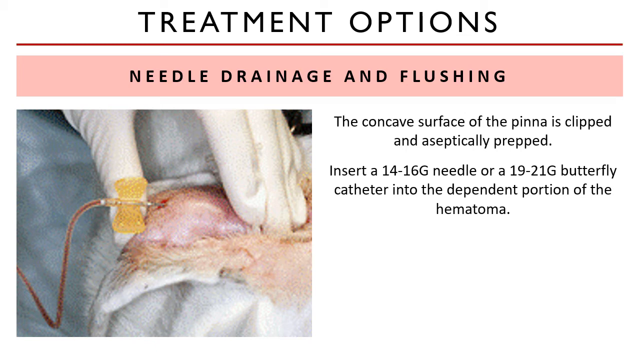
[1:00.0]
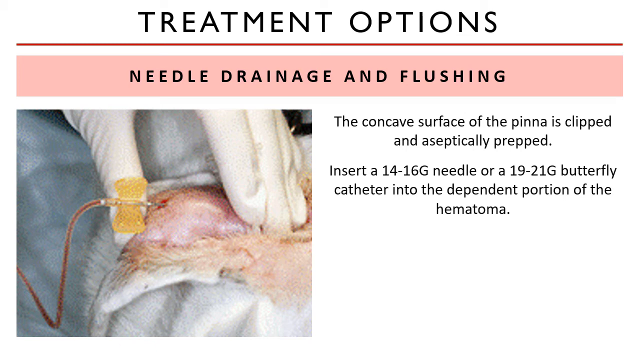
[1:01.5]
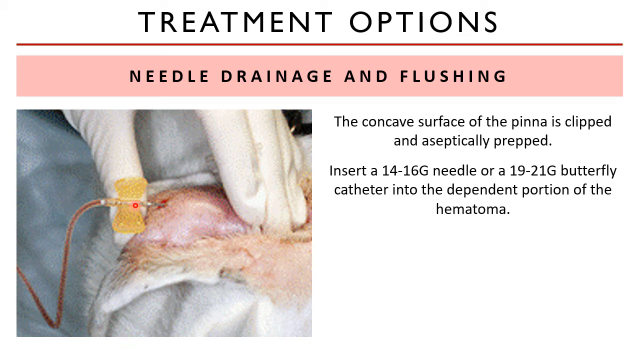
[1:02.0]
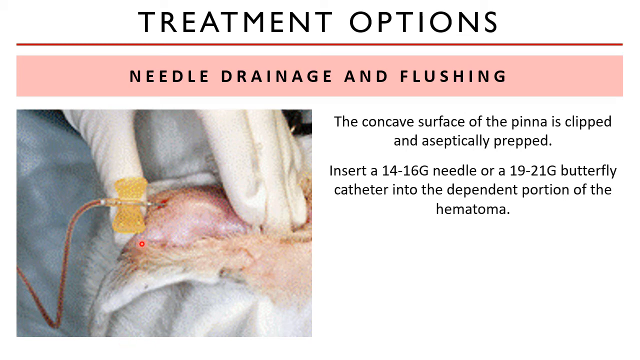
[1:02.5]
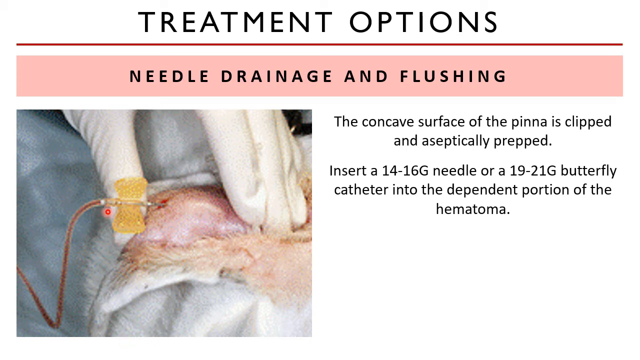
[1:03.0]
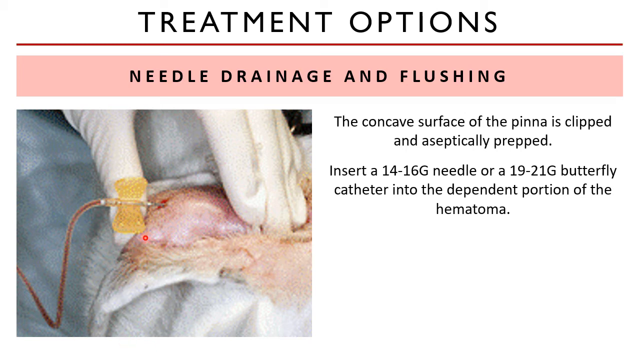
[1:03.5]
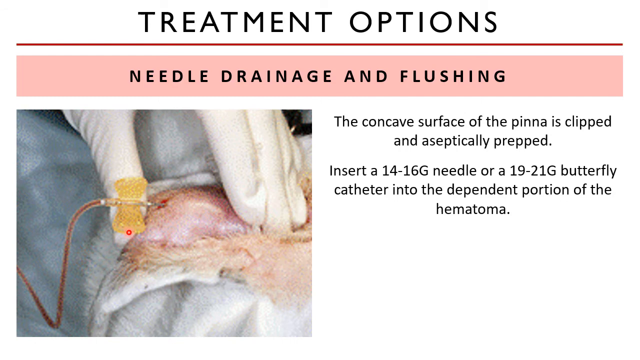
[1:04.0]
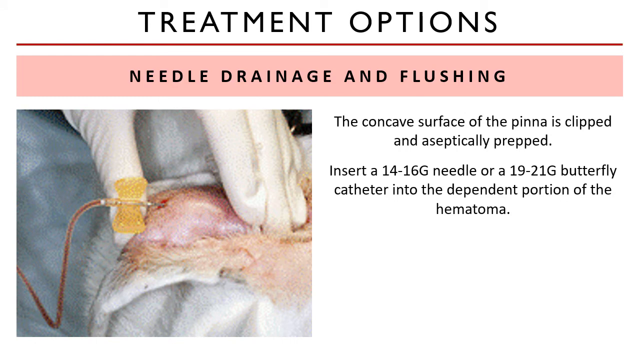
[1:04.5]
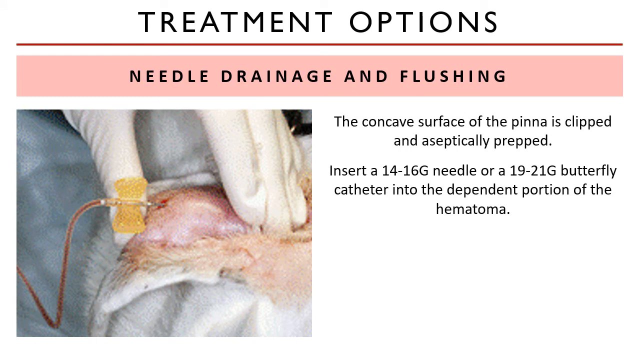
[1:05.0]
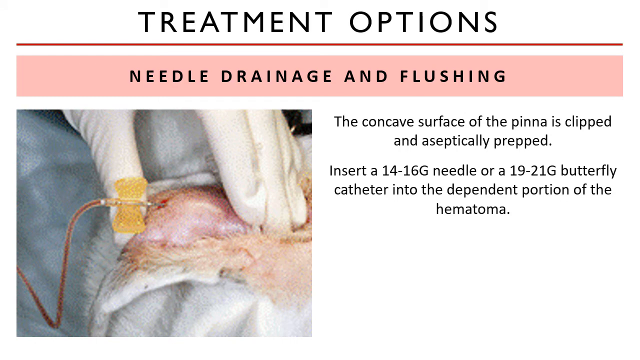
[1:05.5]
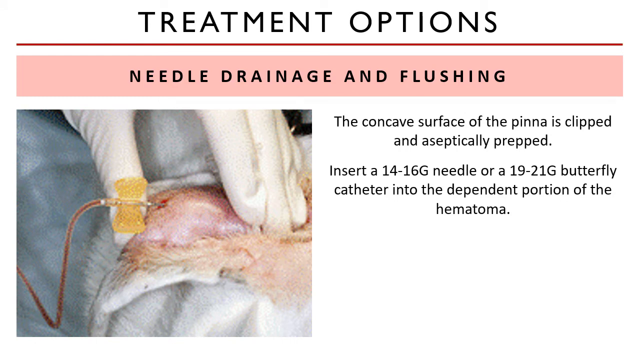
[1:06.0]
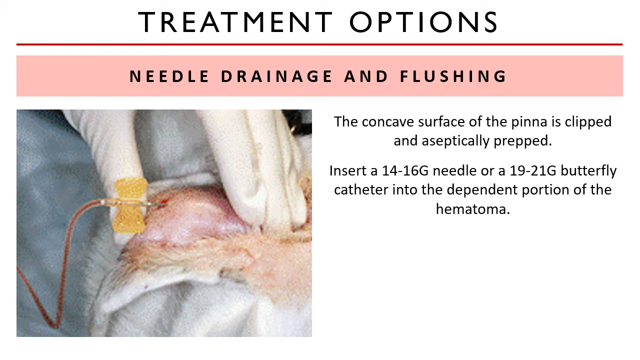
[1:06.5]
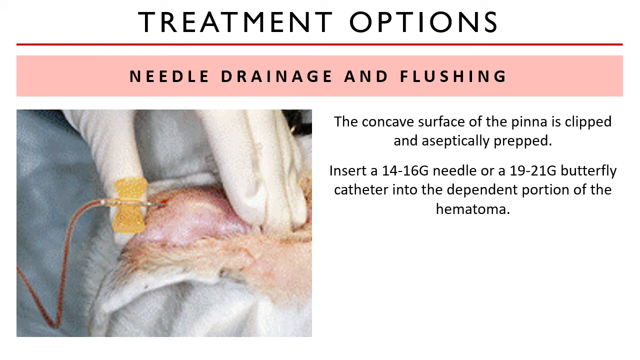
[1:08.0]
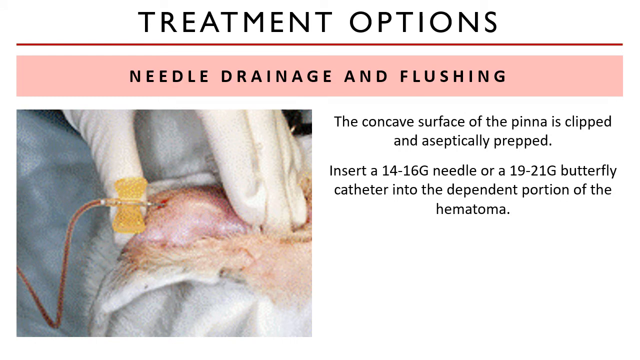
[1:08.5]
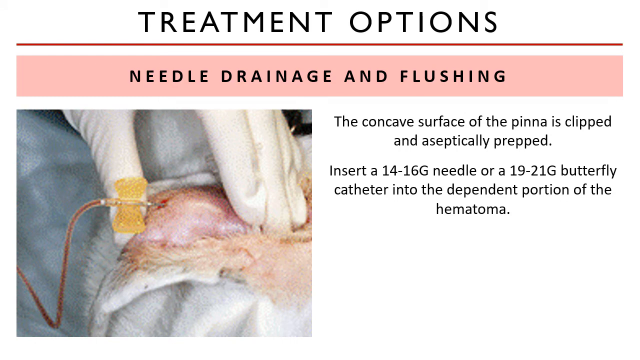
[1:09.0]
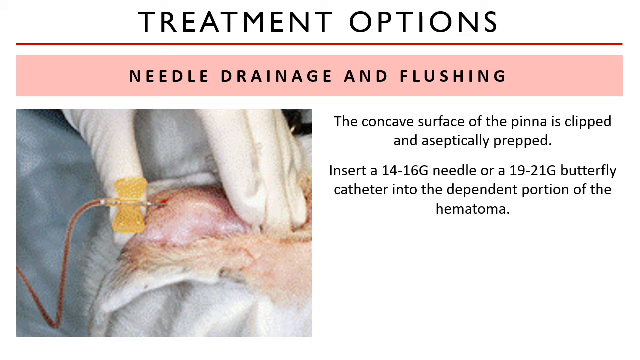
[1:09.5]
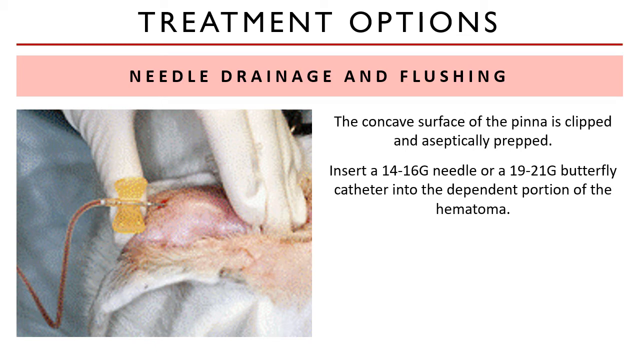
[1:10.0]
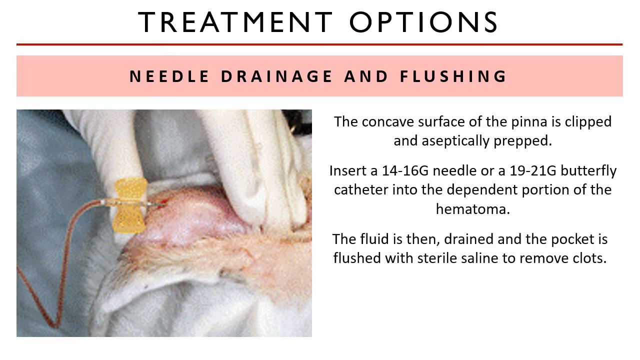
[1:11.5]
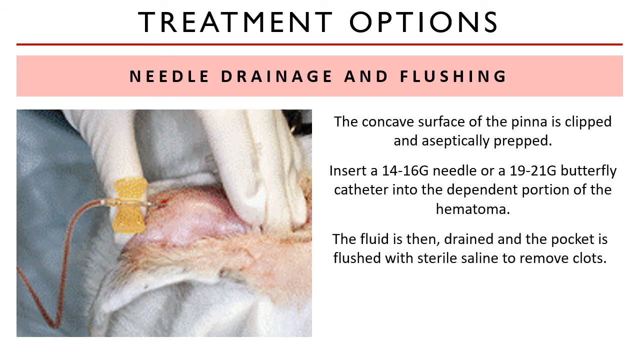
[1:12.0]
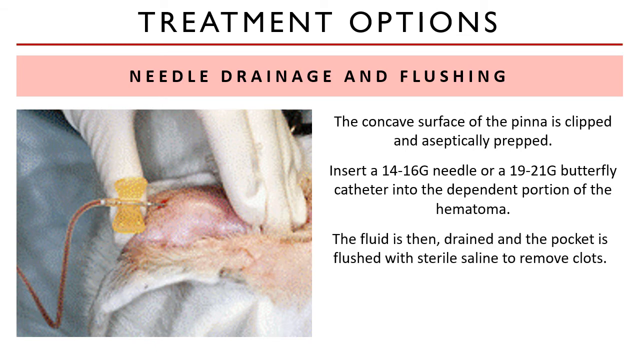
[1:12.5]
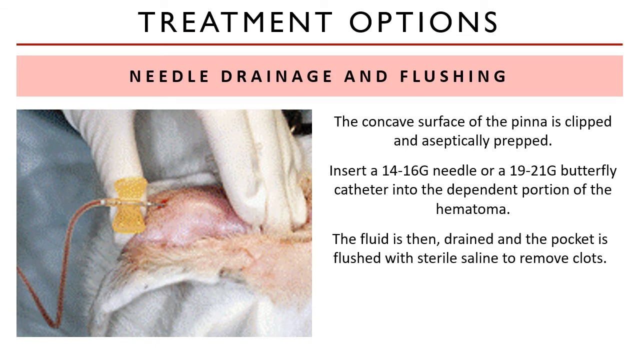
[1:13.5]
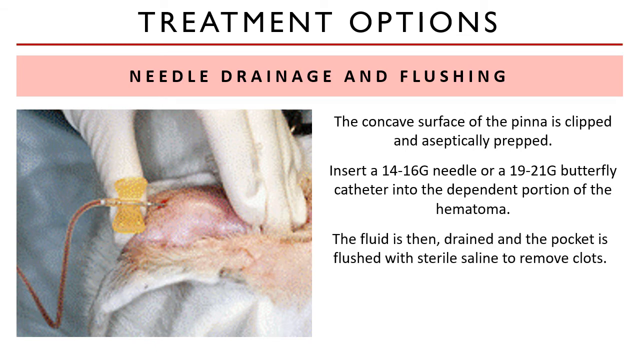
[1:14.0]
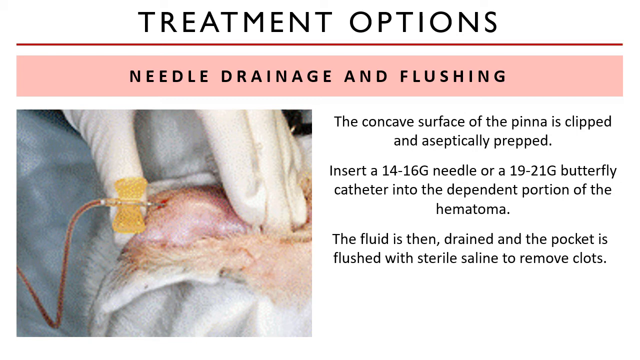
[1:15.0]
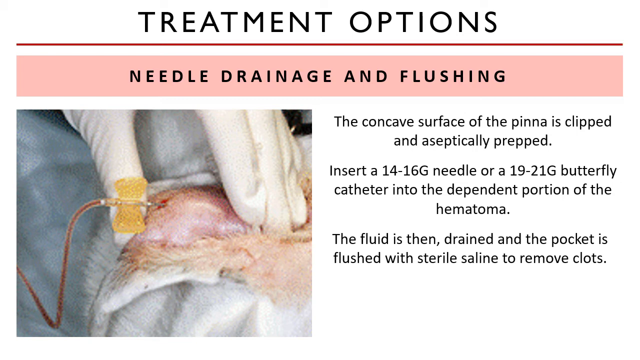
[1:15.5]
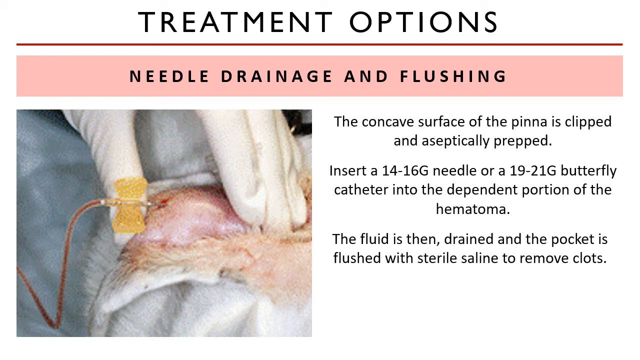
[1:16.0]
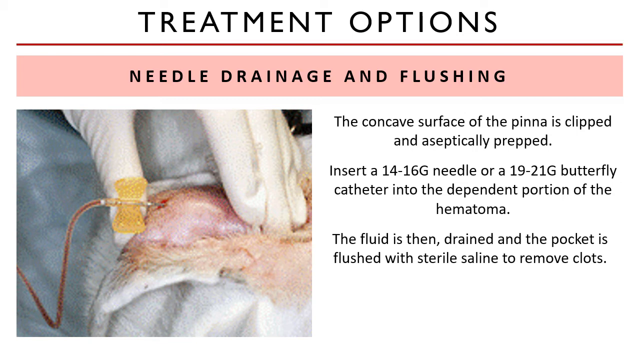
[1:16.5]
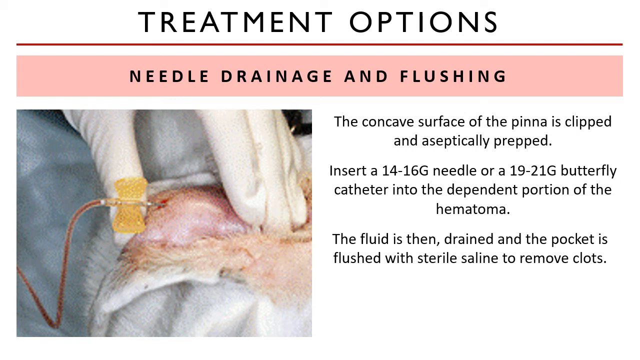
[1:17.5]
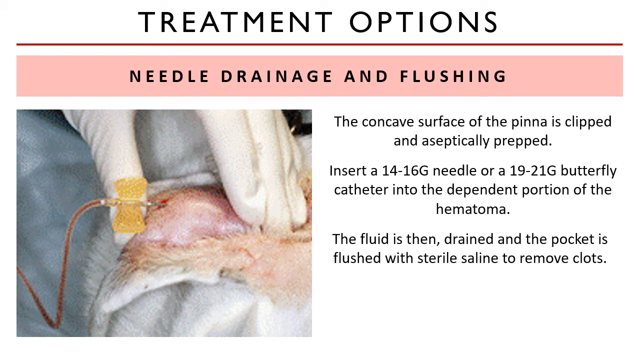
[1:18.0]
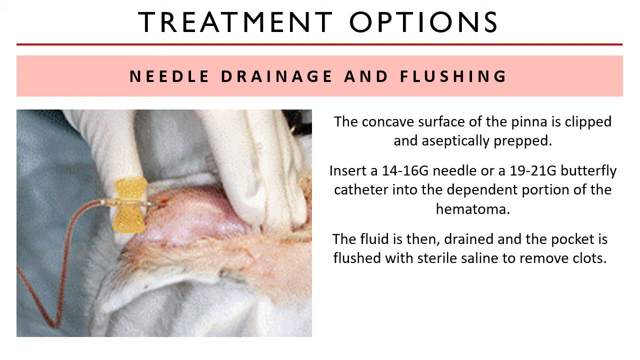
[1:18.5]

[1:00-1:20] At the top, in black capital letters, the text reads "shoot with confidence." A thin red line acts as a divider, then the background becomes beige again, a light off-white colour. It then turns pink, and the pink part reads "needle drainage and flushing." Below it is white with the same image. The text starts with "the concave surface of the pinna is clipped and aseptically prep," then, with no spaces, "insert a 14-16g needle or a 19-21g butterfly catheter into the dependent part of the hematoma." The needle is seen coming out, apparently doing both of the listed steps. Further text reads "The fluid is then drained and the pocket is flushed with sterile saline to remove clots."